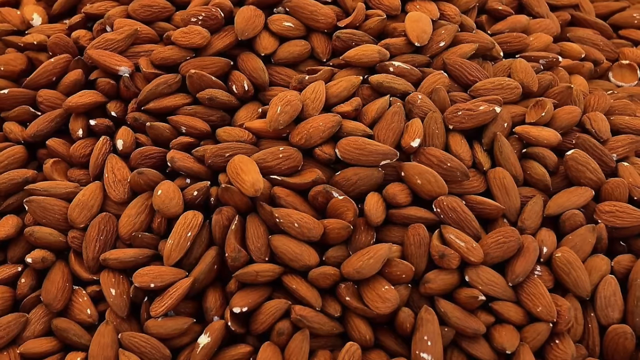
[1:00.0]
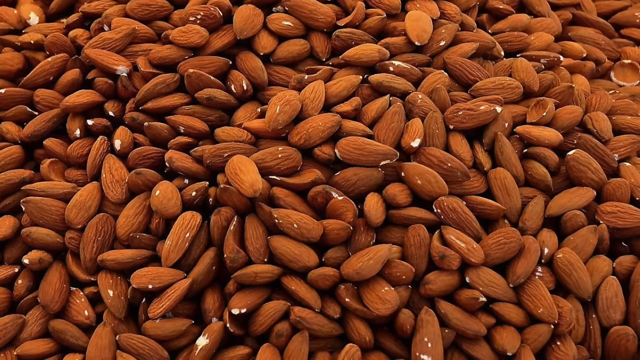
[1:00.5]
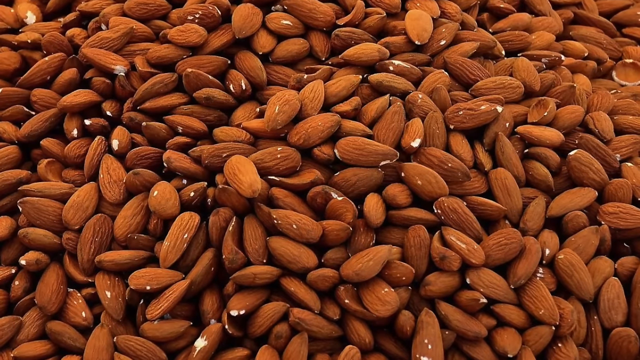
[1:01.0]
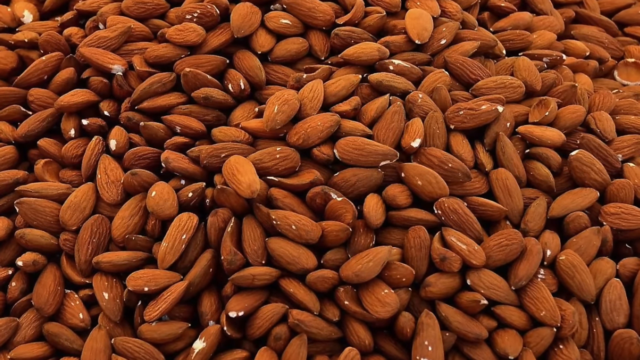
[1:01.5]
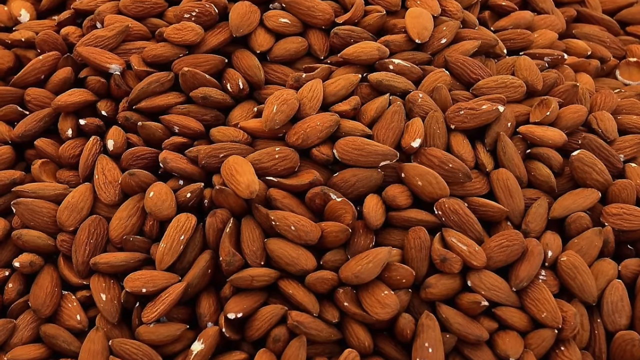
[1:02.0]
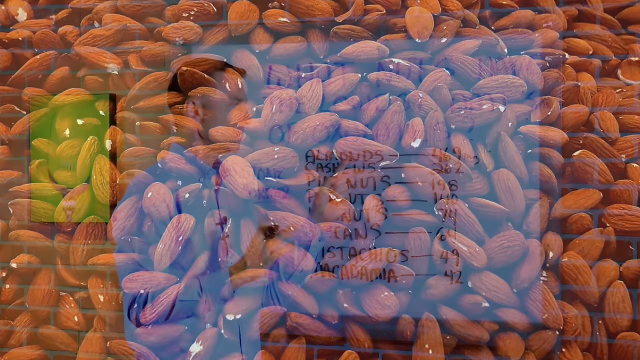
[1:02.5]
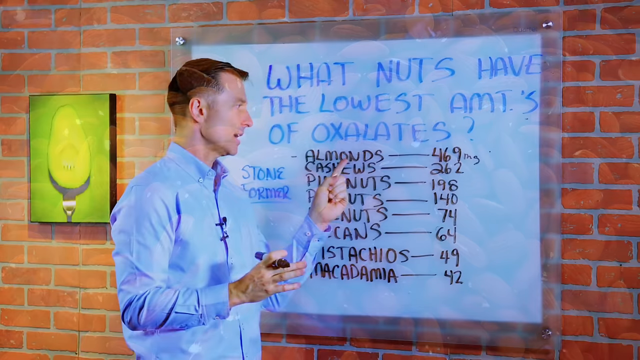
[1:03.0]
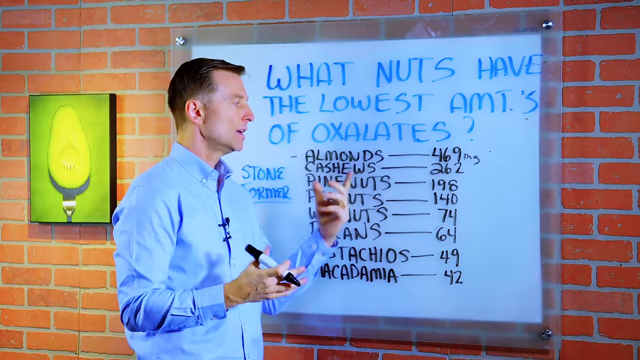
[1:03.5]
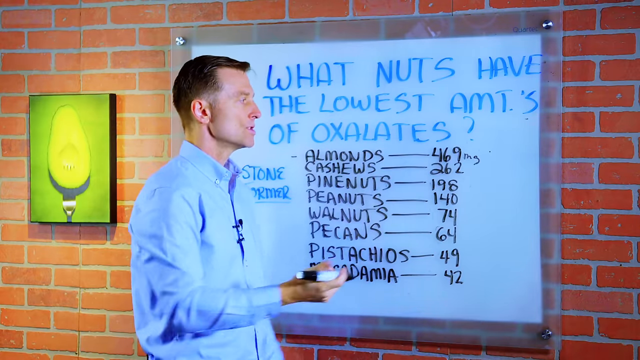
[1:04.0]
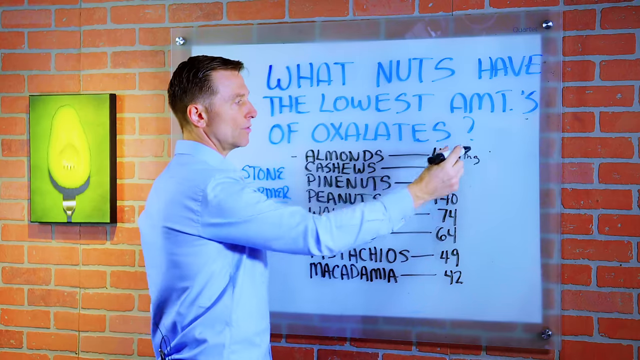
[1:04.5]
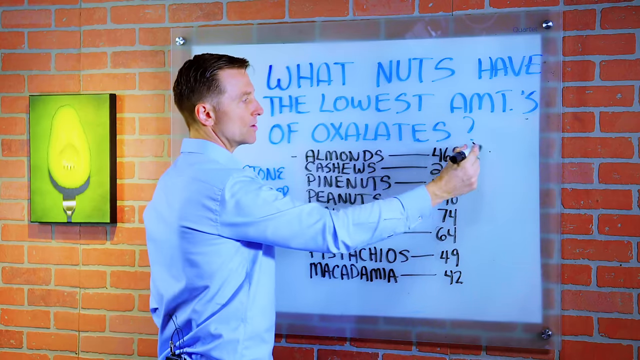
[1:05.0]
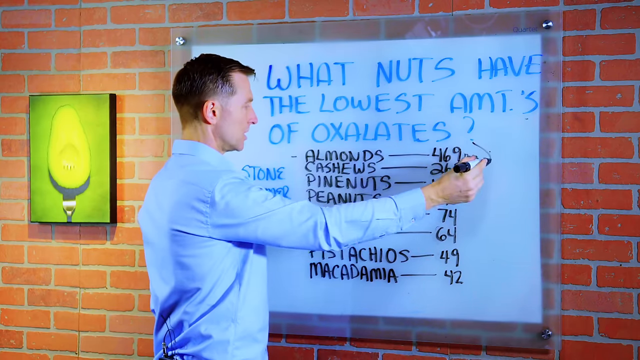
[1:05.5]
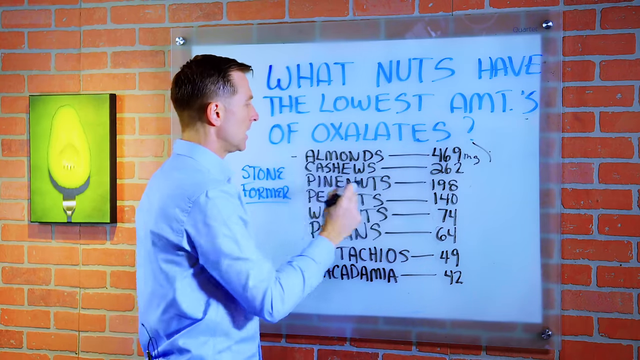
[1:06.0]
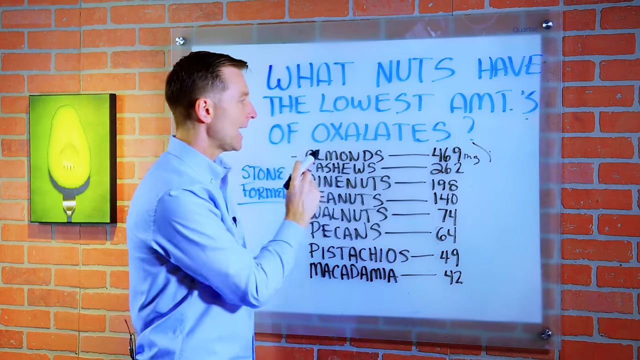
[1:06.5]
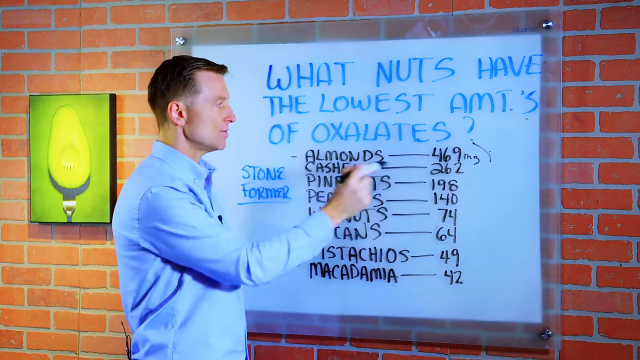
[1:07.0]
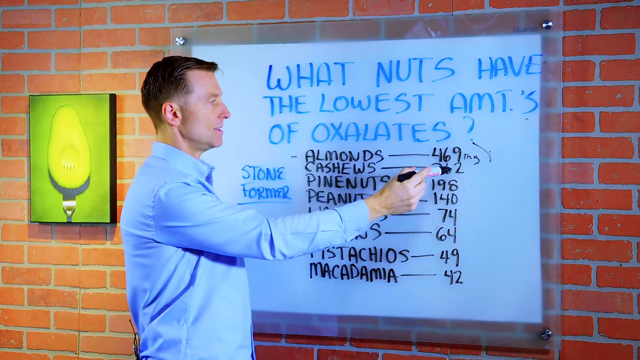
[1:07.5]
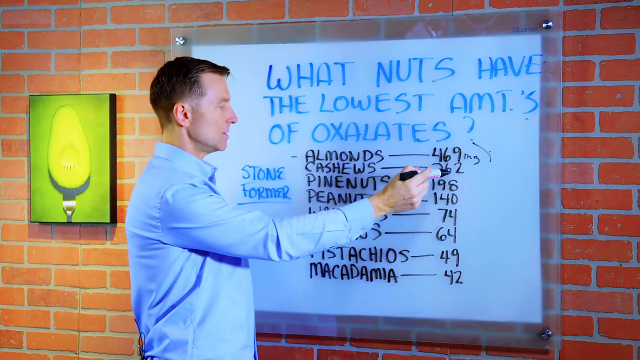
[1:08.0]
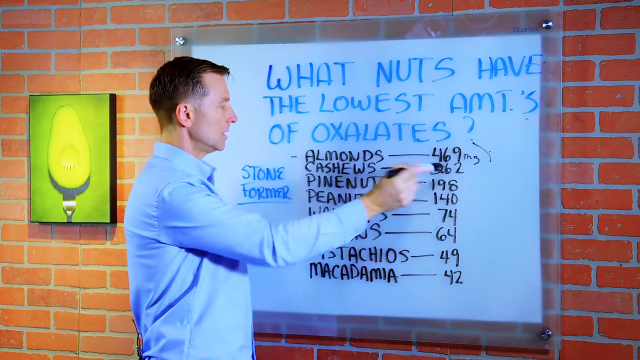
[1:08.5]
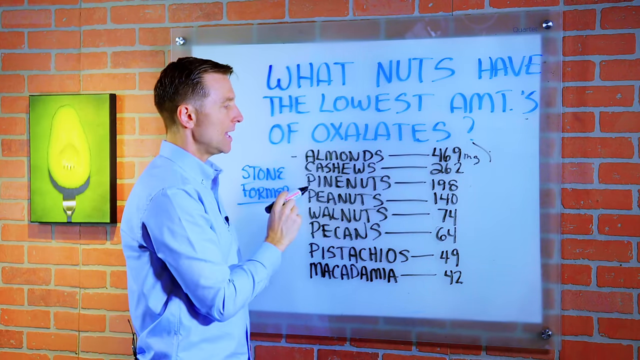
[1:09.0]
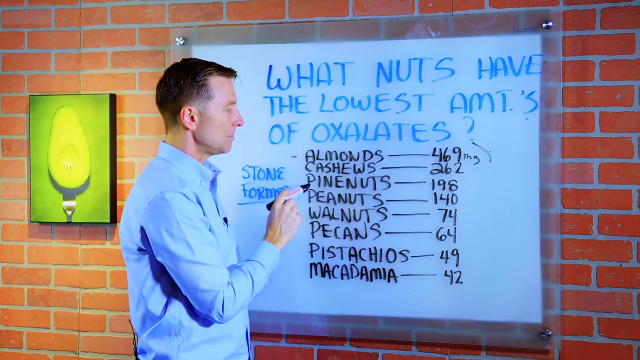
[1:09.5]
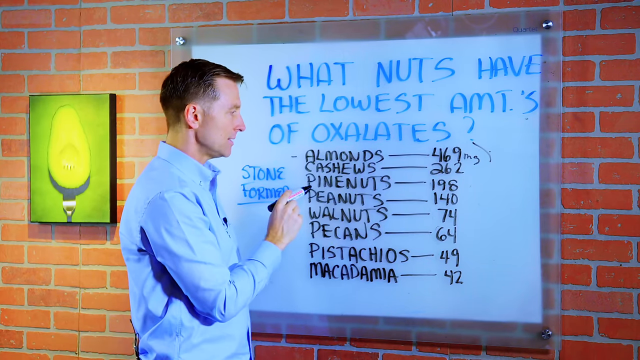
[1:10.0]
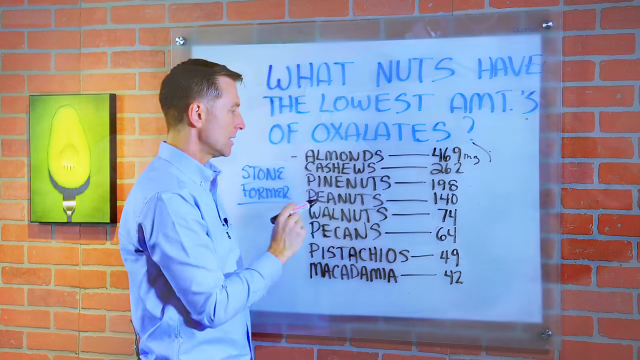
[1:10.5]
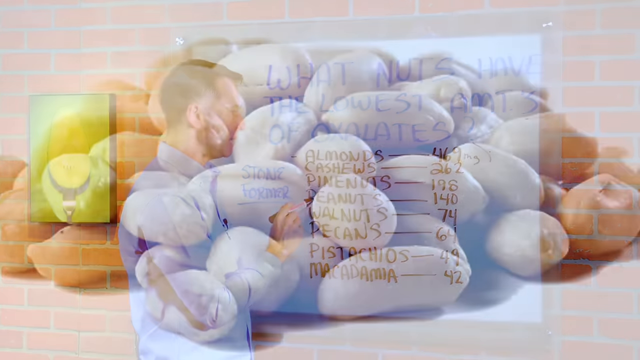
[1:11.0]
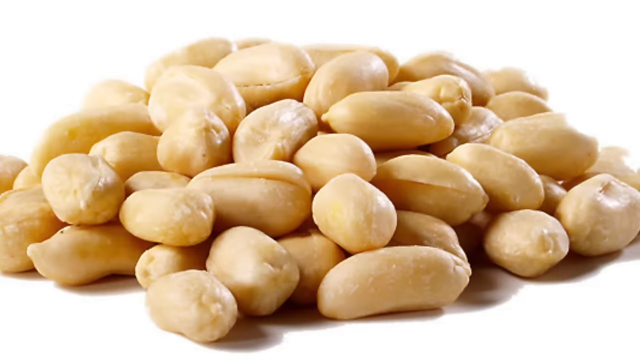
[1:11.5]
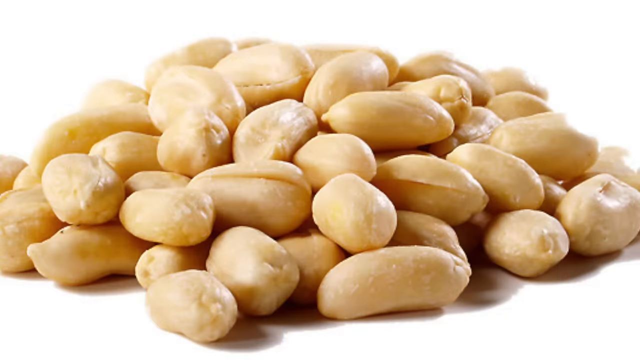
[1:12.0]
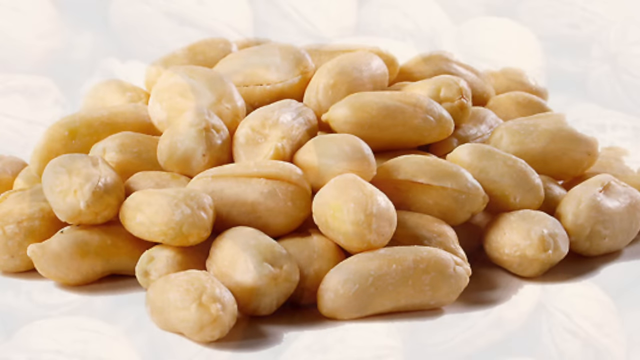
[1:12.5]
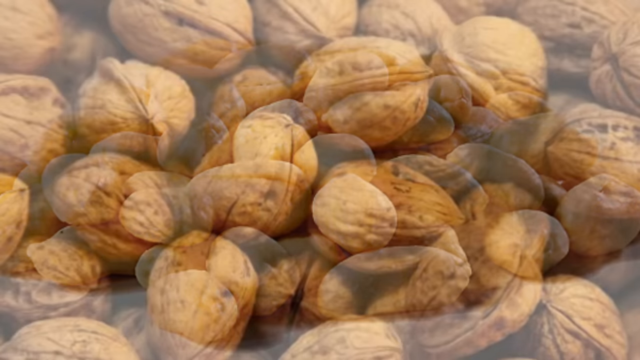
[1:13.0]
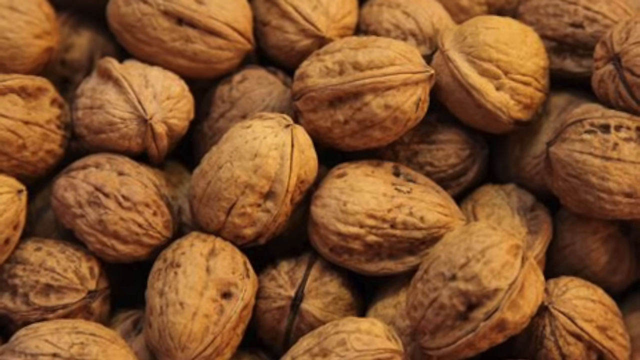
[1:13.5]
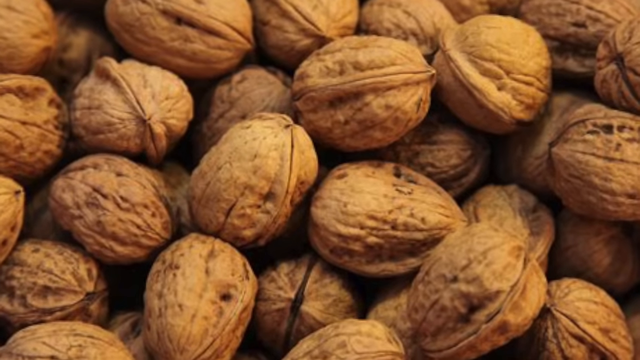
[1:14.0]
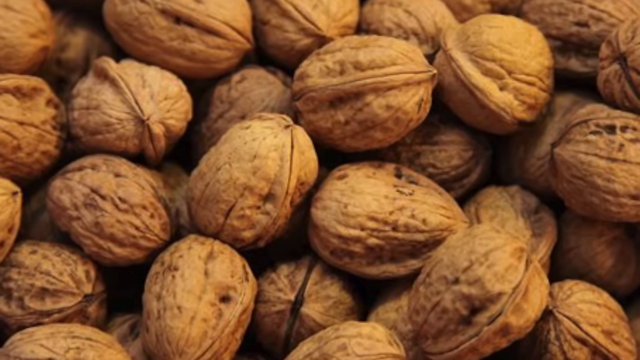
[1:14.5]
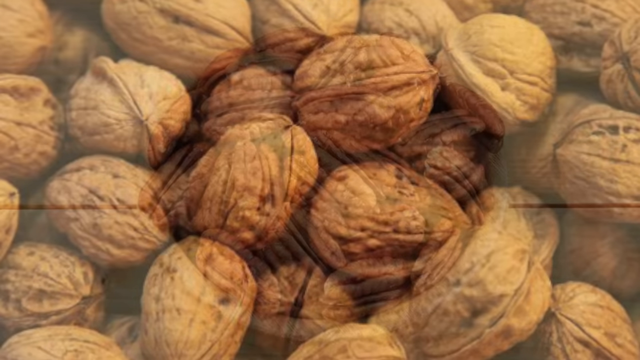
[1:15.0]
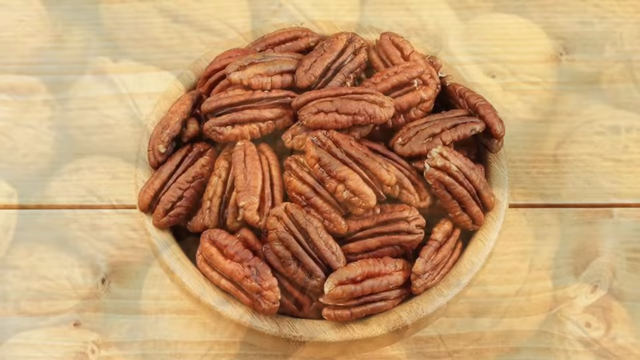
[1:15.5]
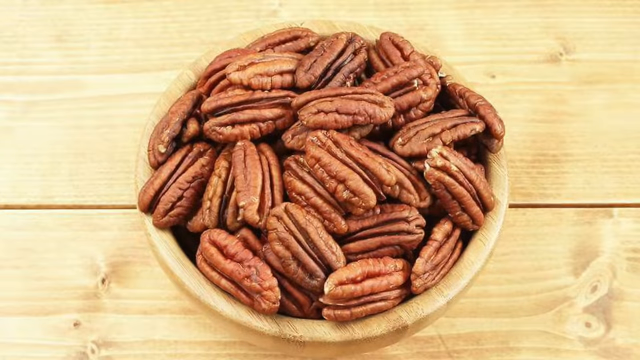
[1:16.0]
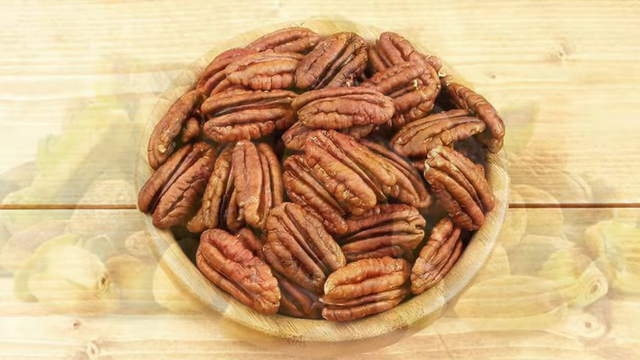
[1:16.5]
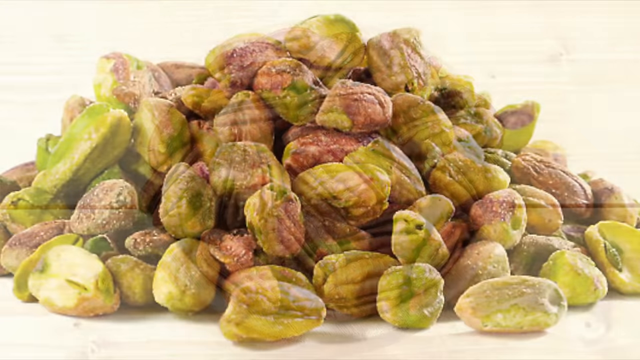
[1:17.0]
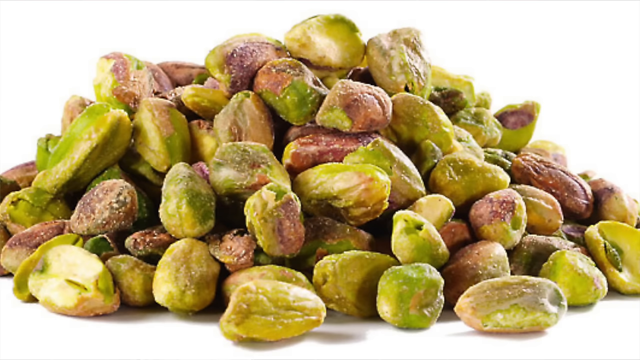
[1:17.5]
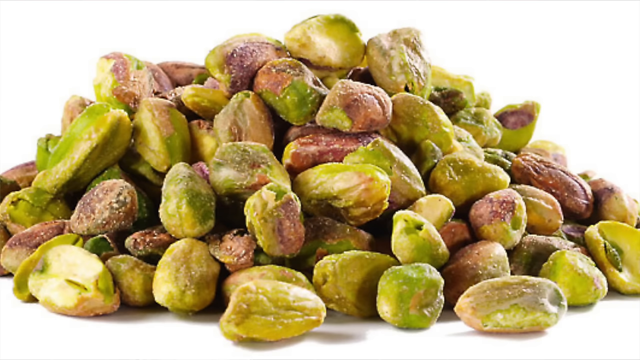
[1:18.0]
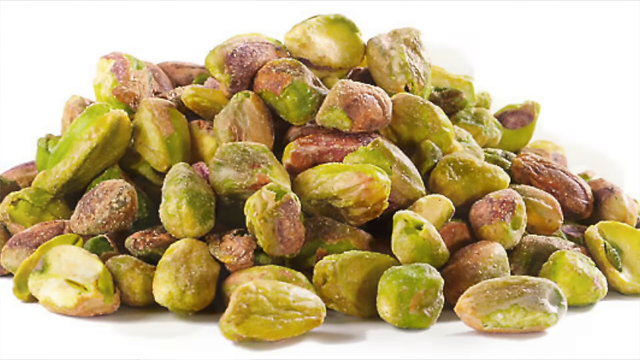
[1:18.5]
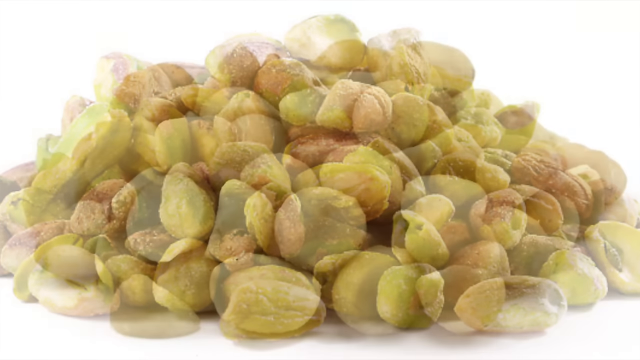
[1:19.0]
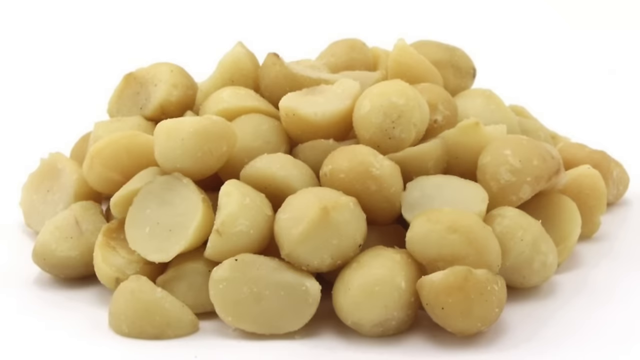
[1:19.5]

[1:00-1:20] The video flashes to pecans, then to peanuts, then to what appear to be pistachios. A close-up shows "Stone Farmer". Nuts are shown on screen: peanuts, cashews, pistachios and almonds.